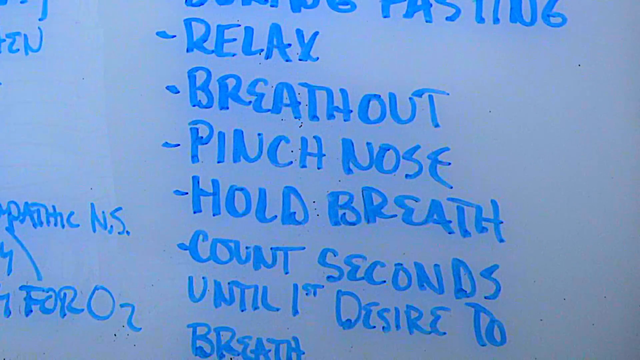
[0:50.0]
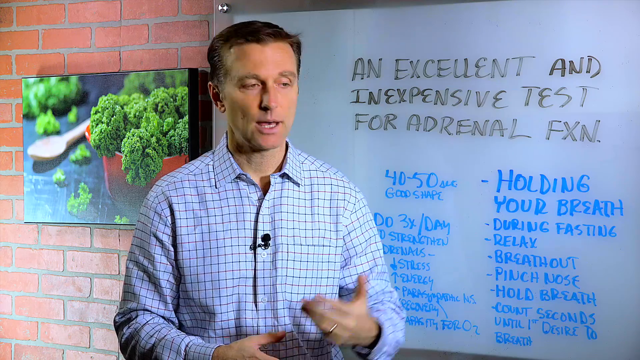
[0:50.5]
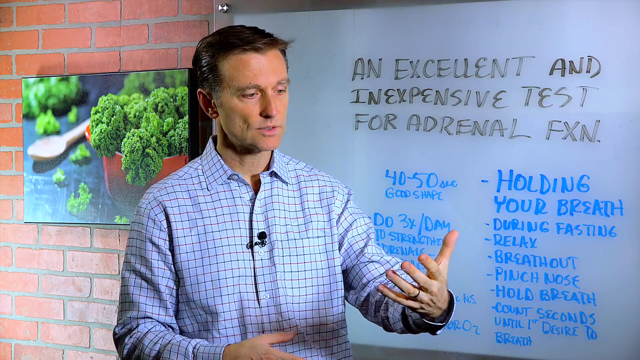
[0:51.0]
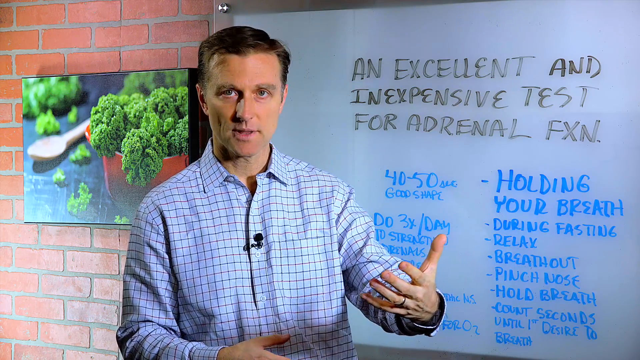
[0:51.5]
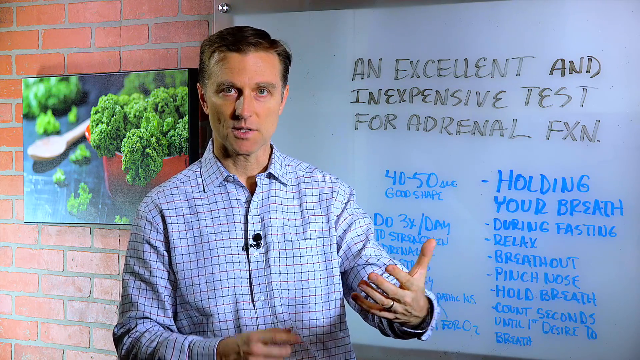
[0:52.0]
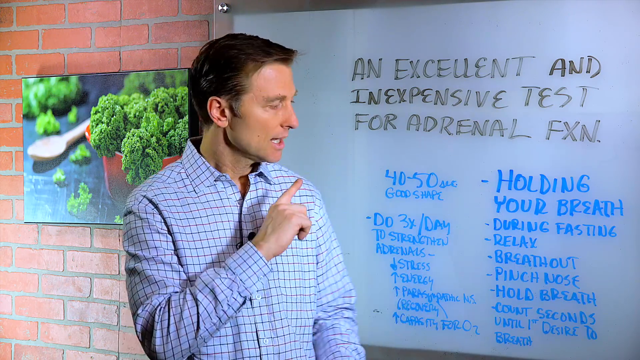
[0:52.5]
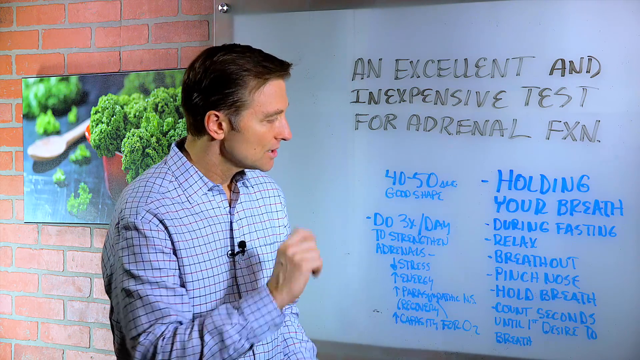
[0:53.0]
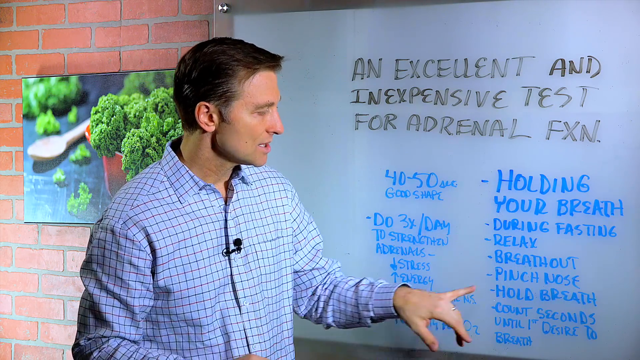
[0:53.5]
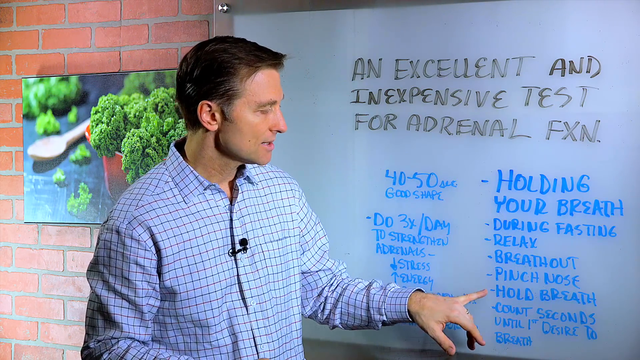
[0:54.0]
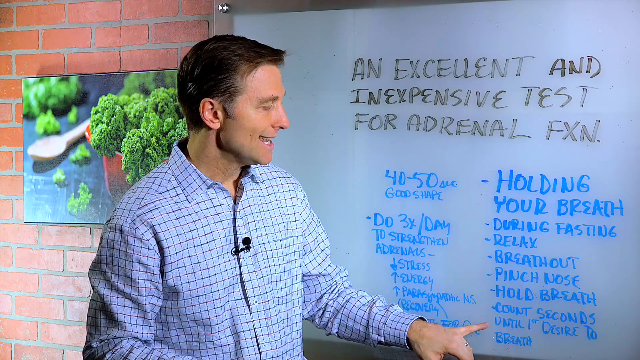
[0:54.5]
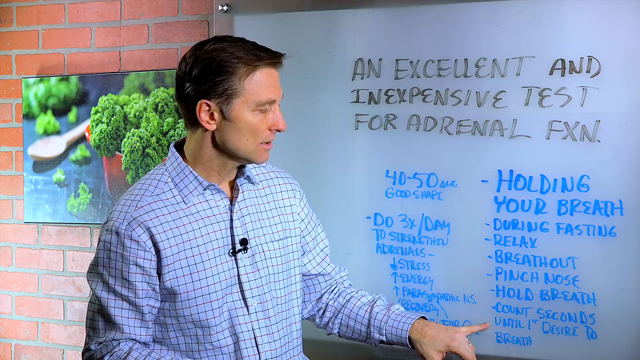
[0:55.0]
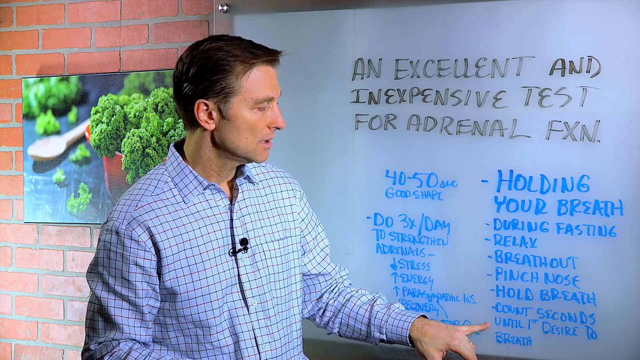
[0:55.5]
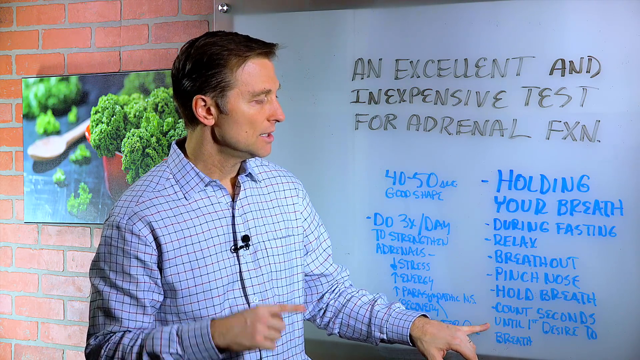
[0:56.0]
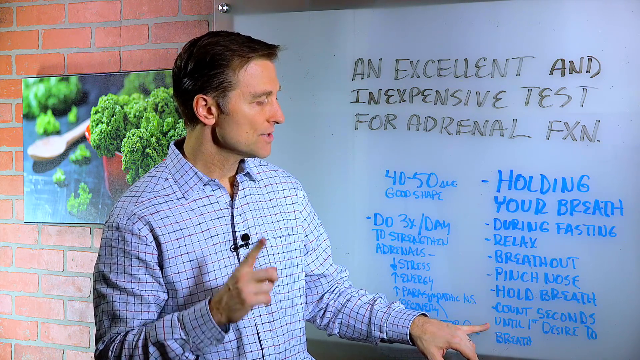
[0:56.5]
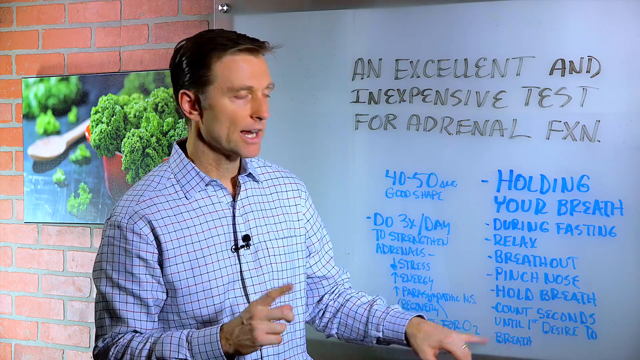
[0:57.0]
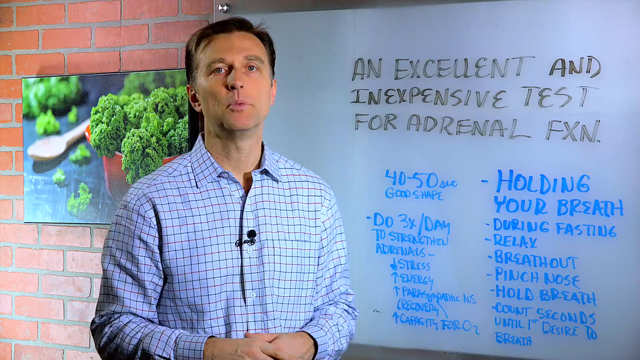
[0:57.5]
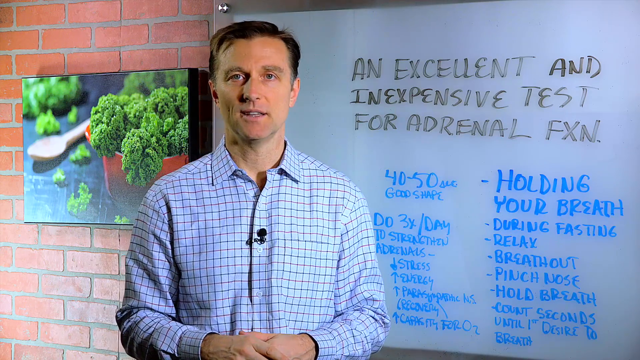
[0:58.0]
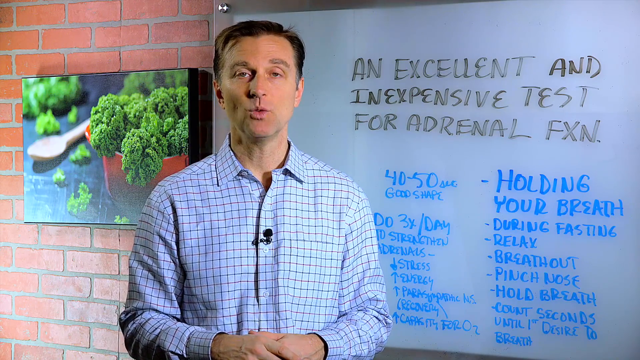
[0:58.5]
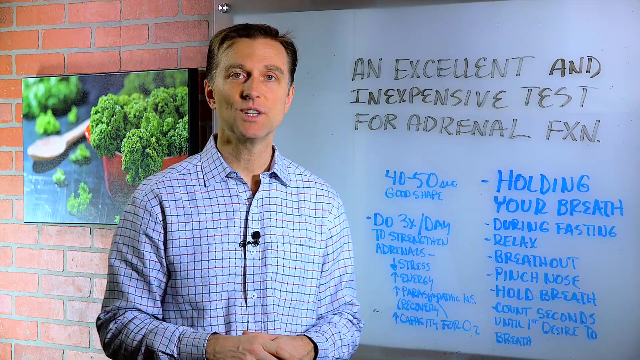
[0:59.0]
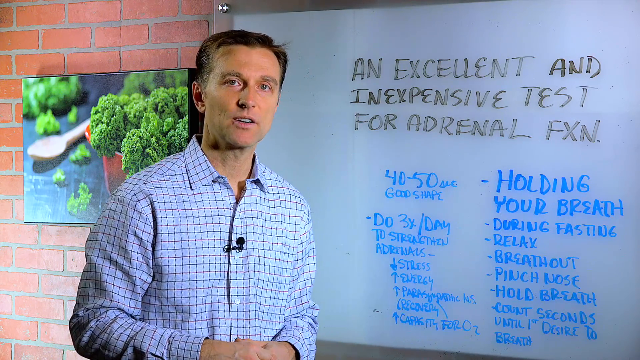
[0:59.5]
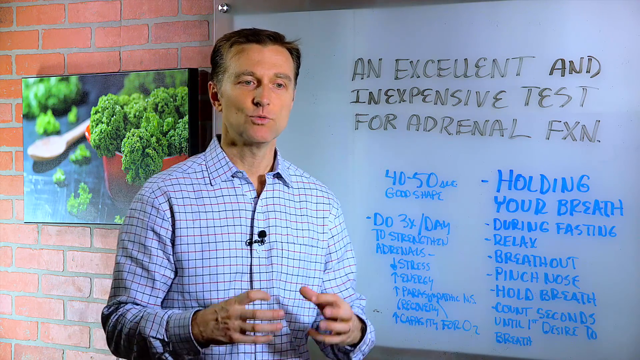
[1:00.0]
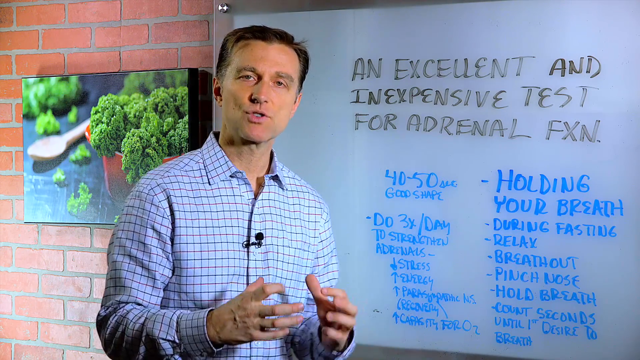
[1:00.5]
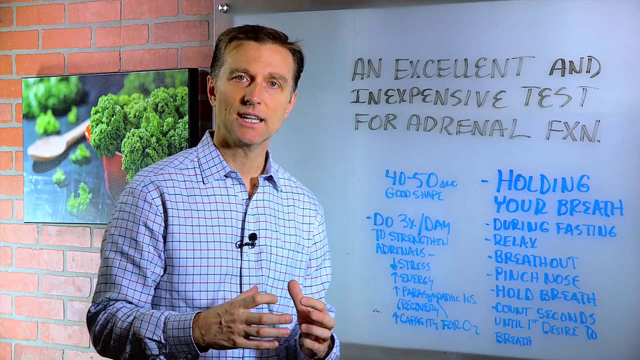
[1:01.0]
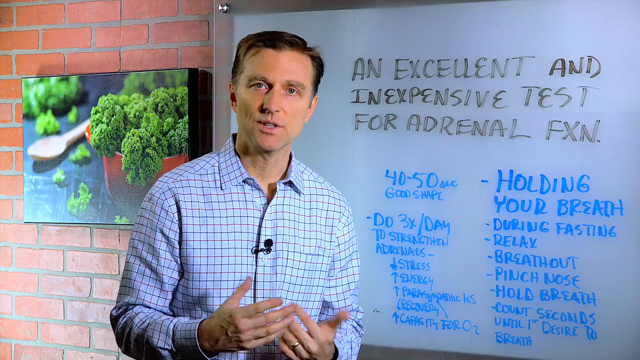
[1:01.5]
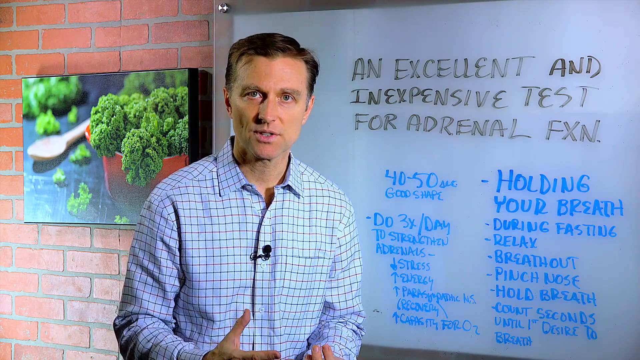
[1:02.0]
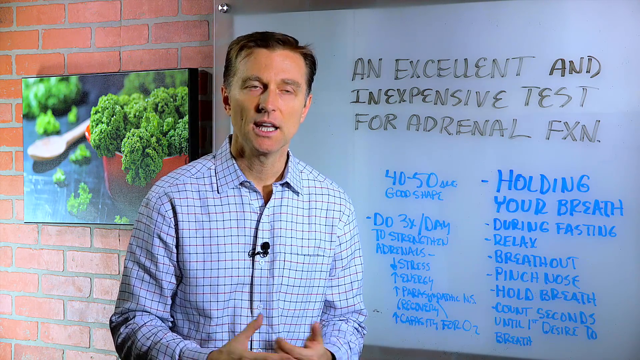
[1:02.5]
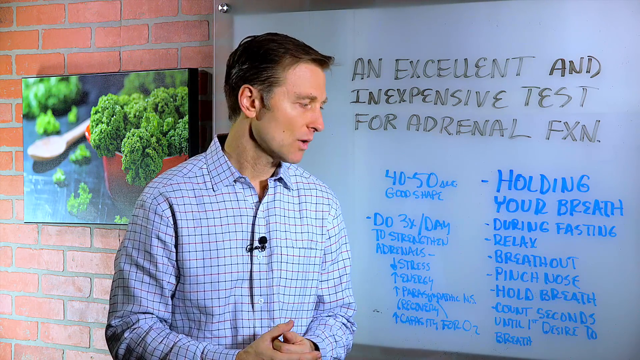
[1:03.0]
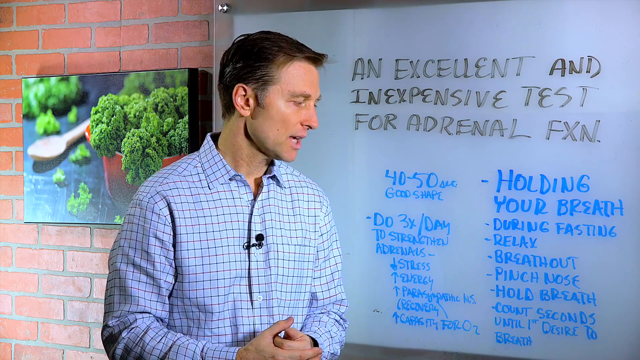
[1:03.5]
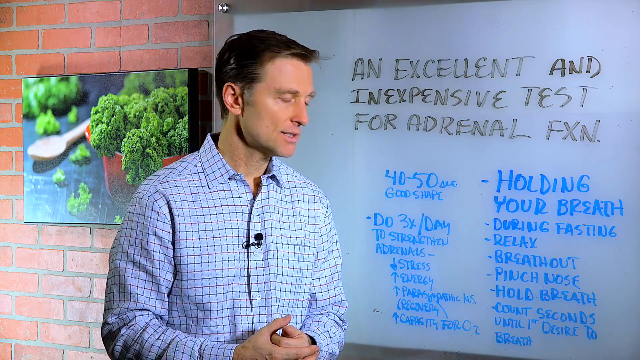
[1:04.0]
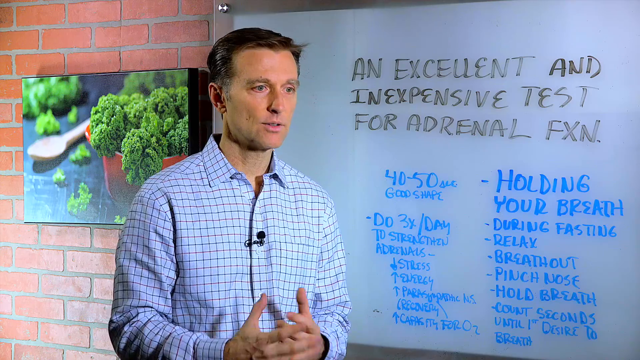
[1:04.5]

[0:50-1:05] The man talks and gestures. He wears a light blue checkered shirt with checkered lines in a deeper blue and brown, and a small black mic is attached to the front of his shirt. He is slender with short dark hair. He tilts his head sideways to look at the whiteboard, which has information in blue and black text; the text at the top says "AN EXCELLENT AND INEXPENSIVE TEST FOR ADRENAL FXN". He turns to look at the camera and keeps talking while gesturing with his hands, then turns to the camera again, raises his left hand and uses it to touch some of the key points written on the whiteboard.